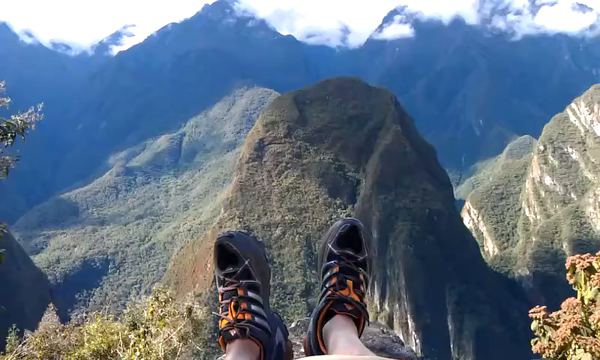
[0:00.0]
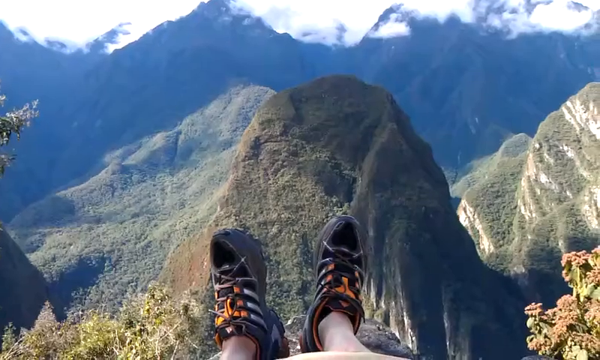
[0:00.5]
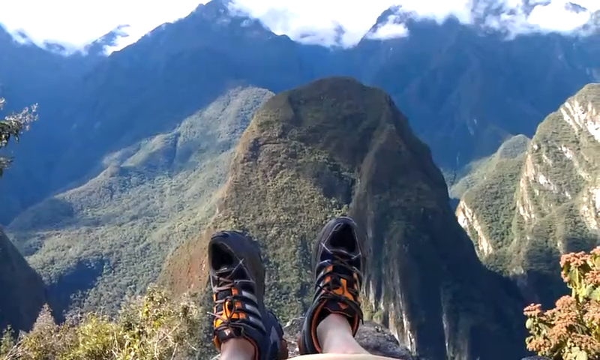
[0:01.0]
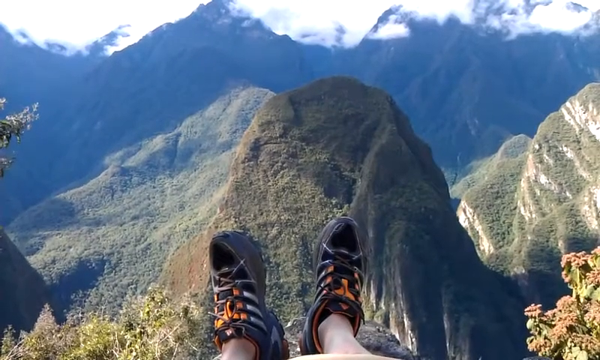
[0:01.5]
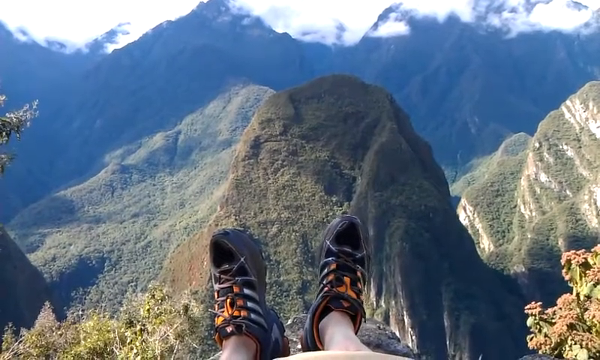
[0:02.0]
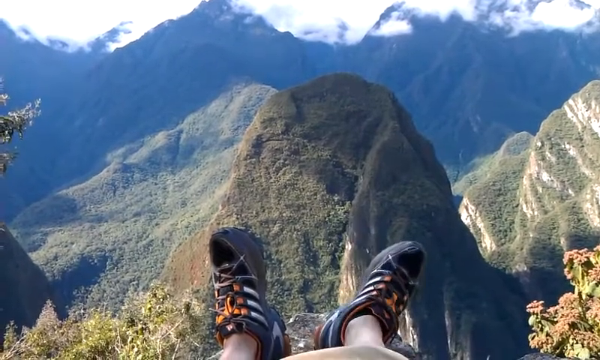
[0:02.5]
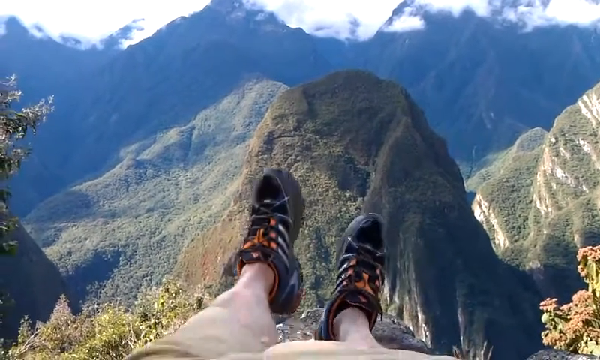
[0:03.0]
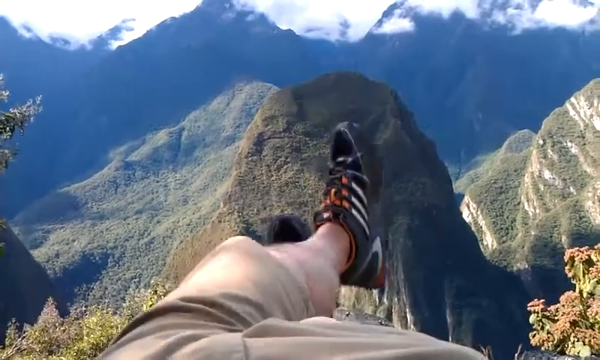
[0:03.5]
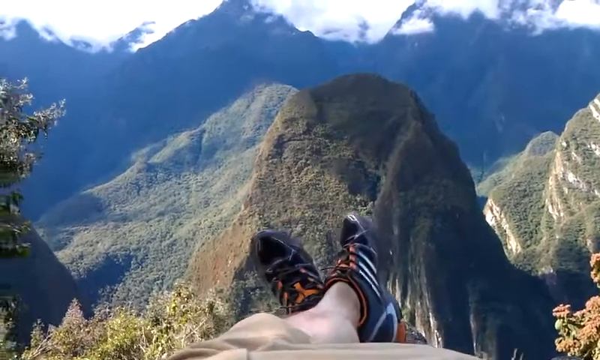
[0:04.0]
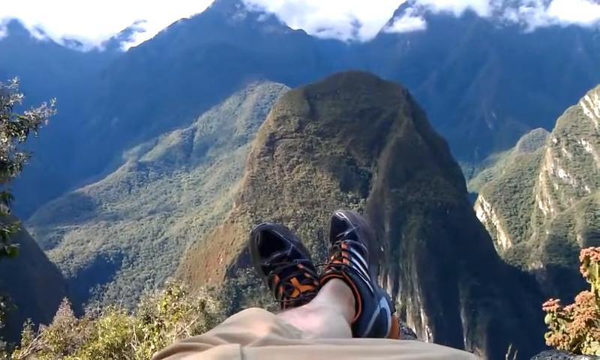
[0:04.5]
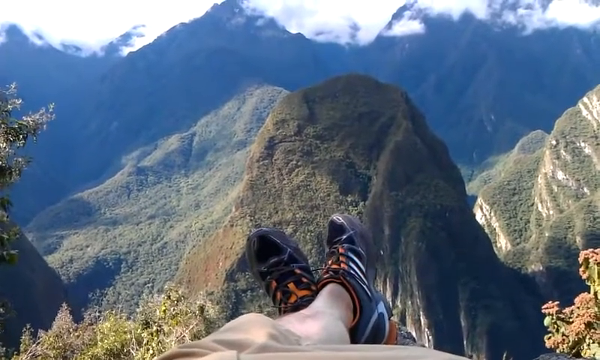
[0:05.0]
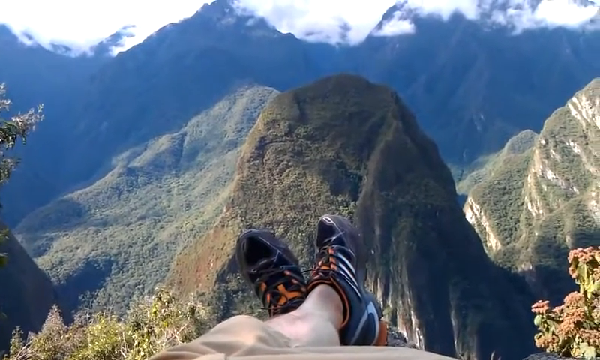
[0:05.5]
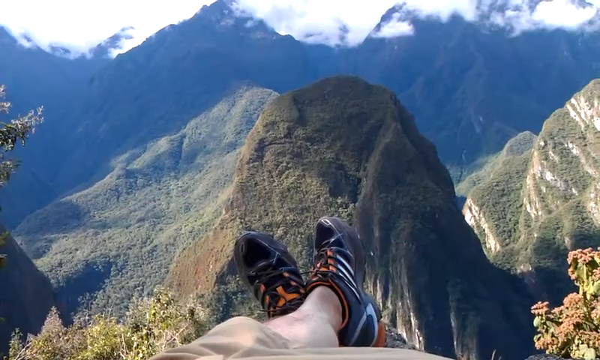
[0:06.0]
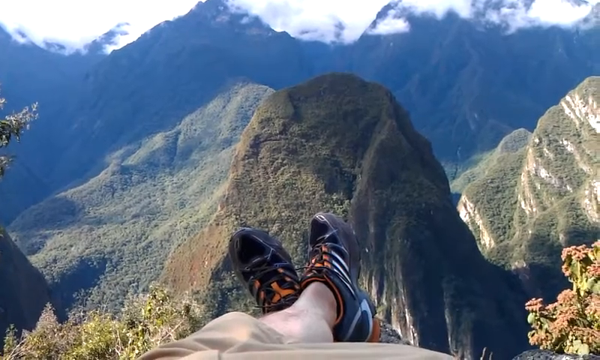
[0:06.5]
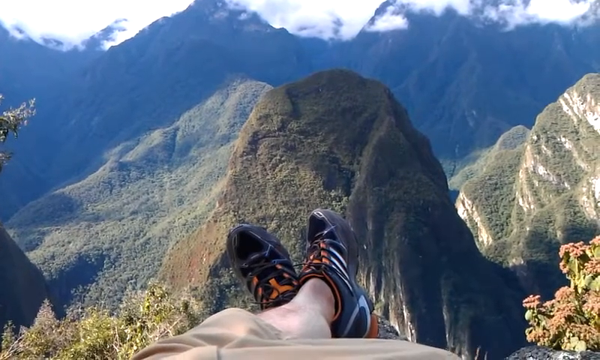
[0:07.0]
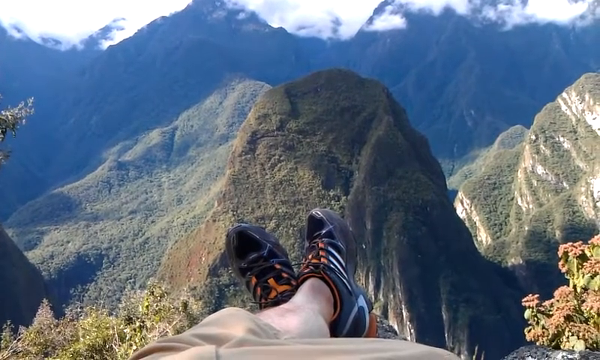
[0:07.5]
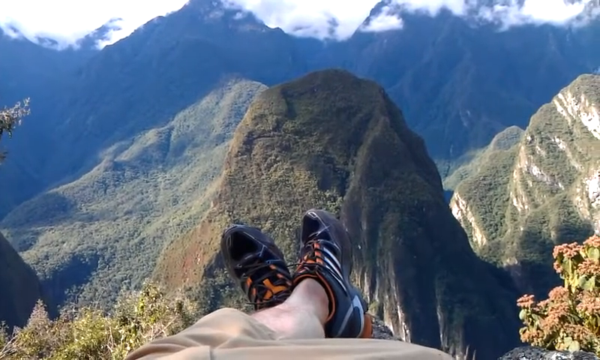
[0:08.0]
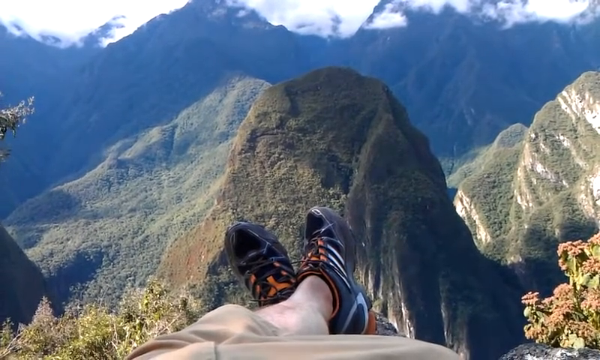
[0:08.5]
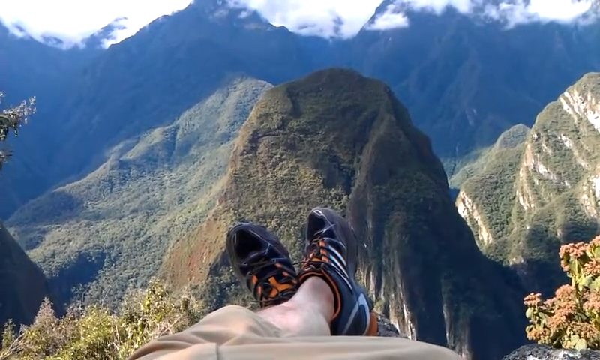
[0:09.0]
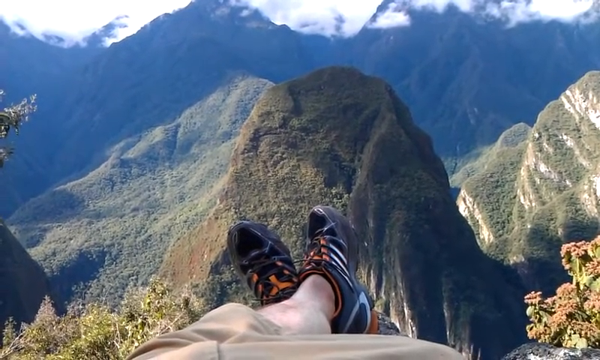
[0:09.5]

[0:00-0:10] High in the mountains, someone sits with their feet dangling in front of them, looking across to a steep, bare mountain with just a few bits of grass and moss on it. Beyond that peak, even bigger mountains stretch away into the distance, all rather similar: bare, almost treeless and rocky. There is possibly one tree just by the mountain climber. The person slightly moves their feet as they watch the view. They wear shorts and have bare legs, and from the colours they are wearing and the shape of their legs they appear to be a man. They look very relaxed as they look across the mountains.